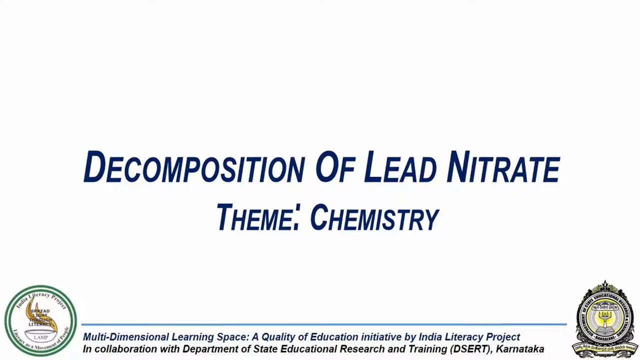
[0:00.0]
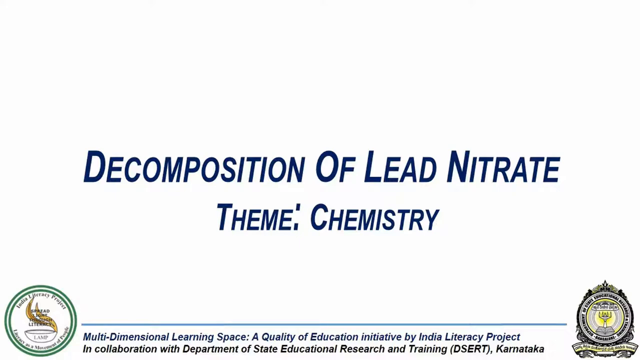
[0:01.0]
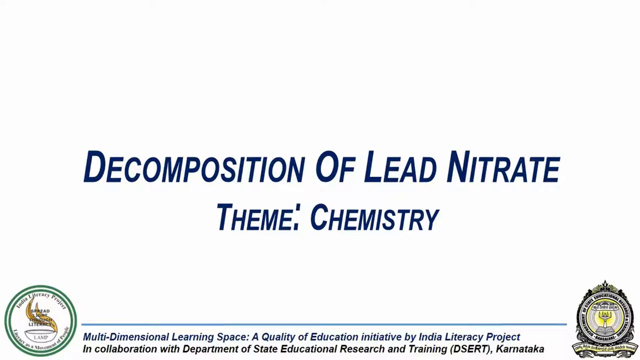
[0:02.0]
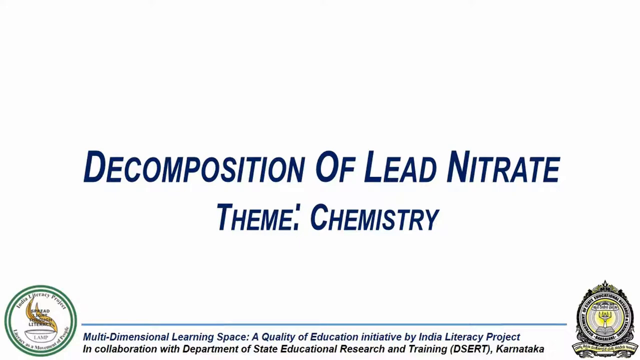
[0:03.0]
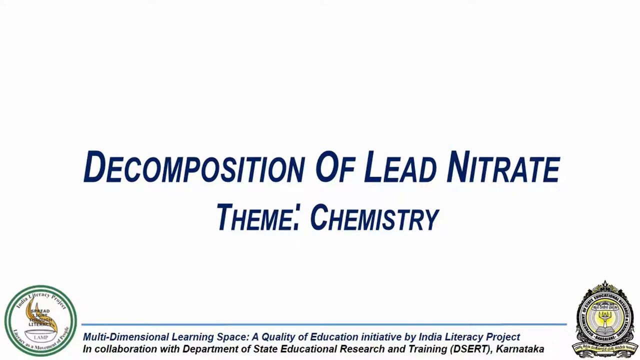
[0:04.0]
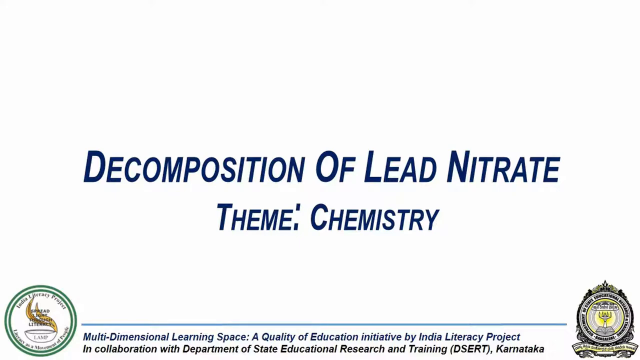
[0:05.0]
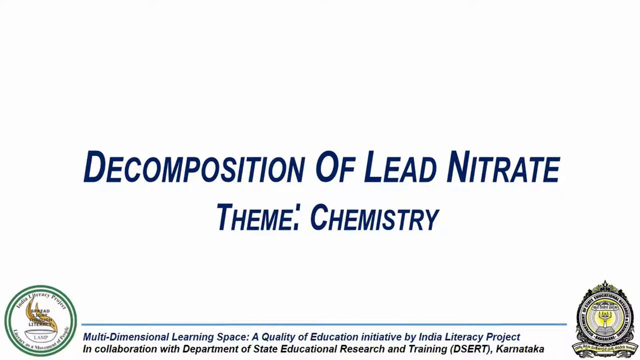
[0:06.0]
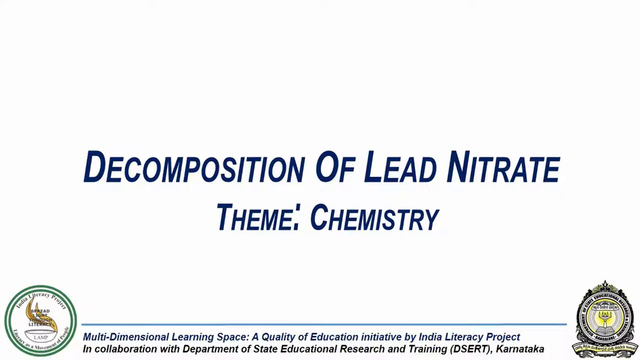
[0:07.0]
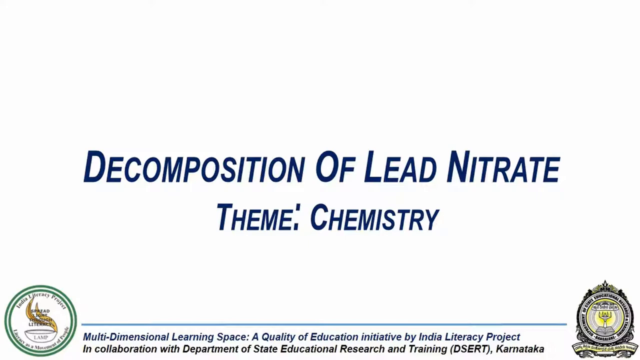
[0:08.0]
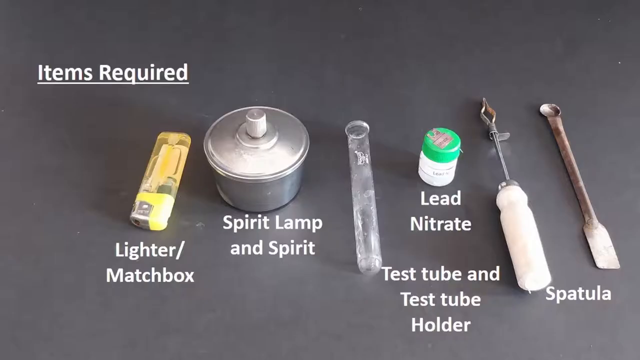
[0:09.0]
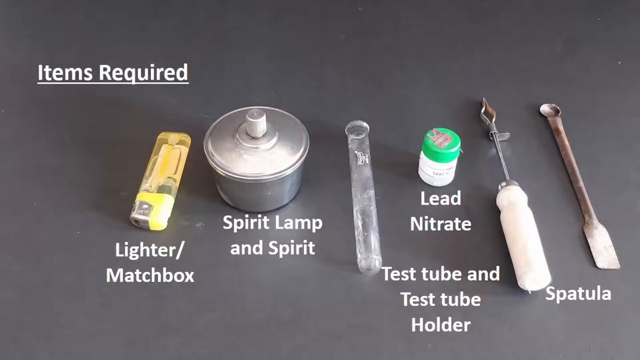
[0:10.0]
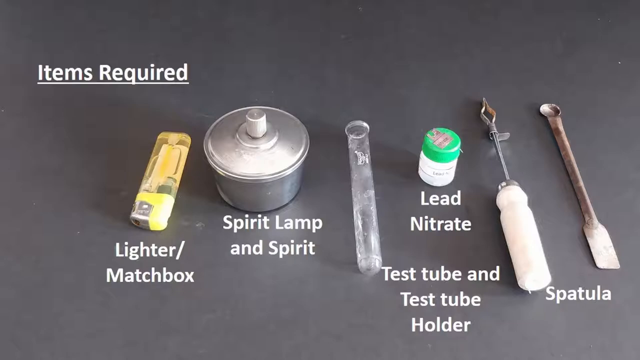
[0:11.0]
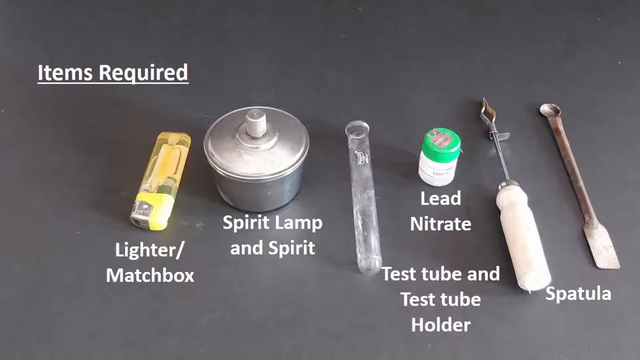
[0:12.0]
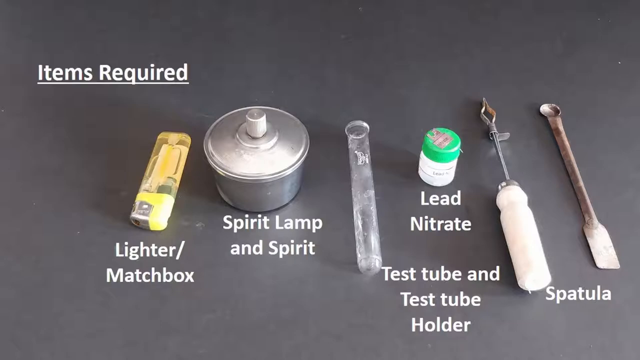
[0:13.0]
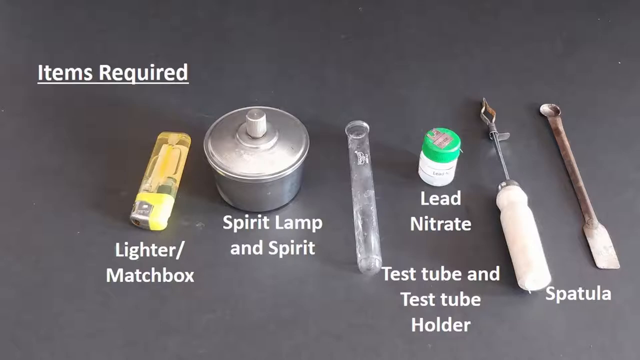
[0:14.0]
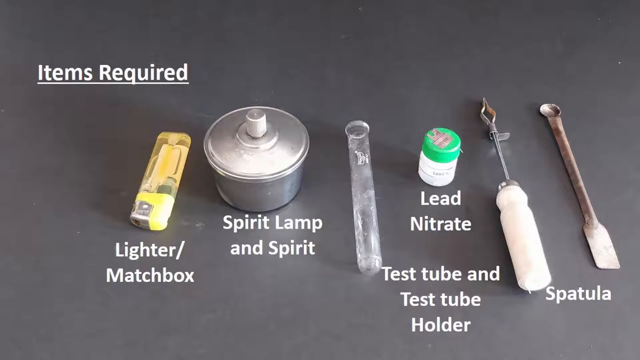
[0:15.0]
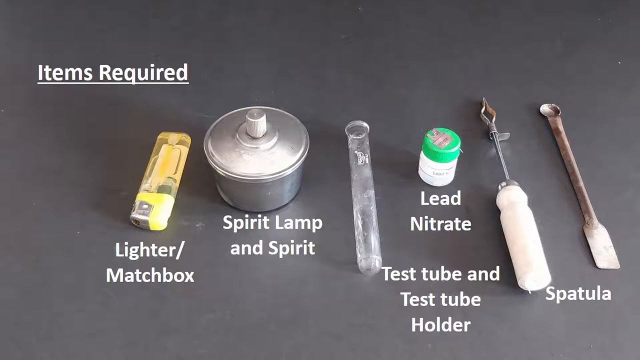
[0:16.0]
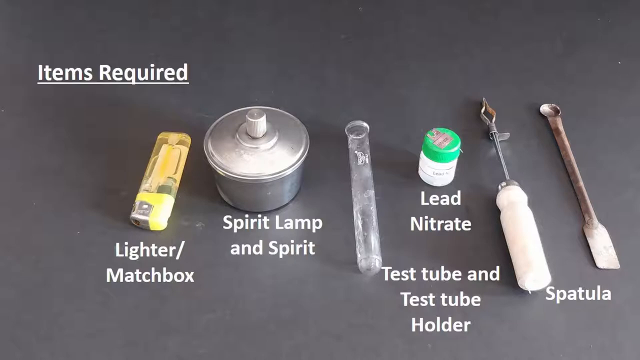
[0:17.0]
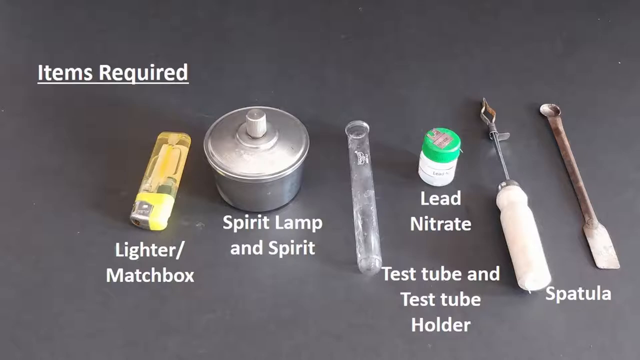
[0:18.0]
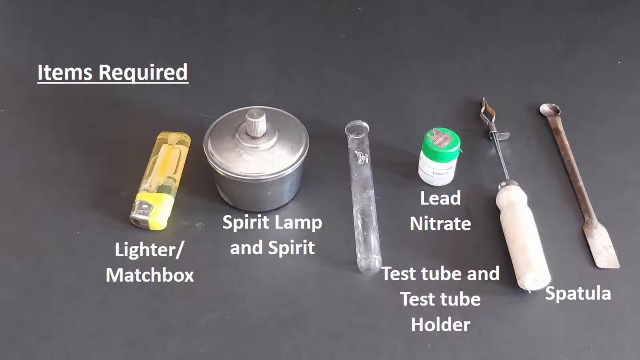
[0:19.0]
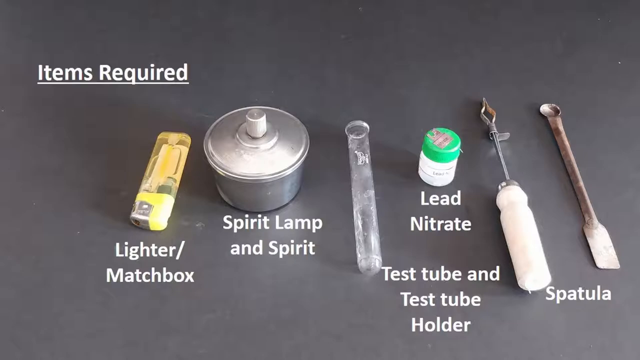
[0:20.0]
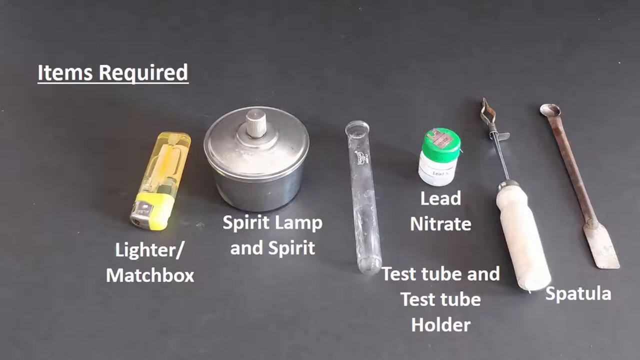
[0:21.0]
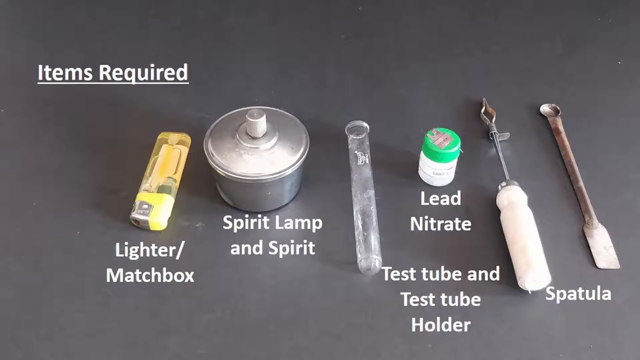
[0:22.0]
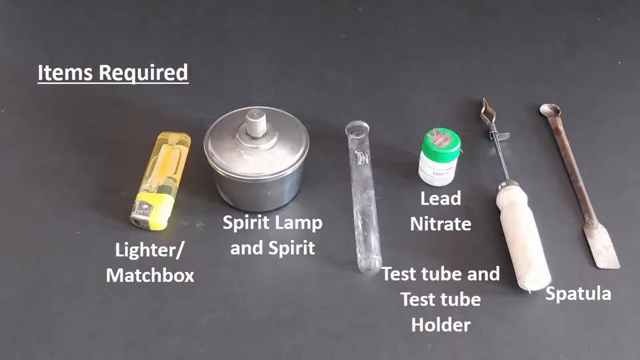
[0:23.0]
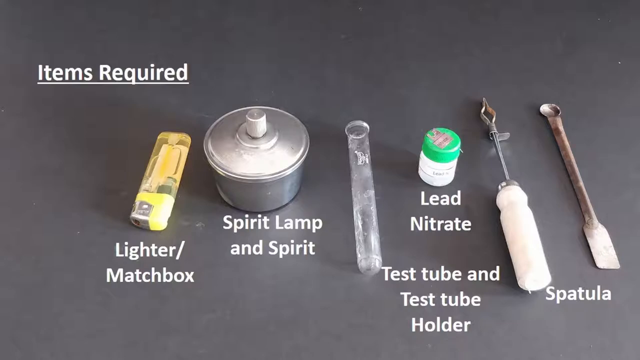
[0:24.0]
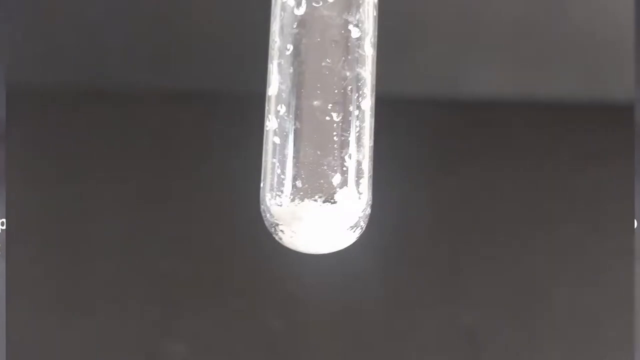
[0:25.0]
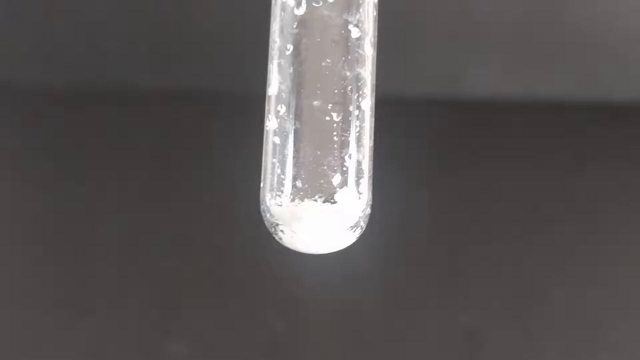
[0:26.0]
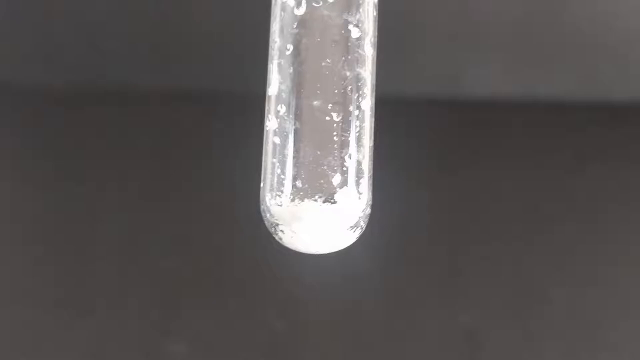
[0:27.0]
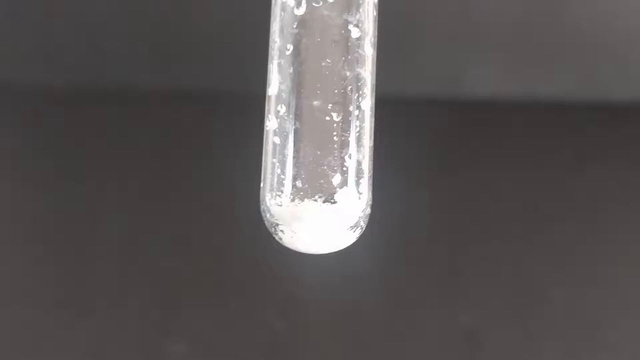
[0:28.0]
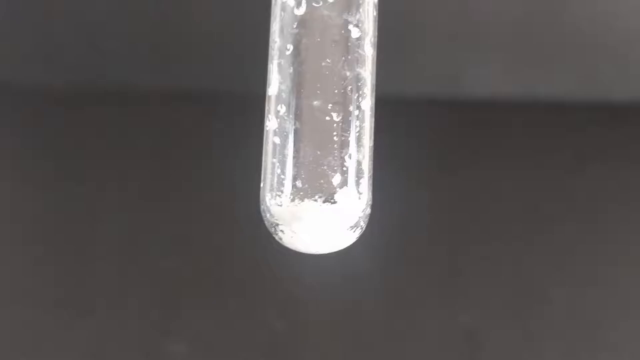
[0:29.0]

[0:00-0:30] The video opens on a white background with blue text in the center that reads "Decomposition of Lead Nitrate Theme Chemistry." There is some kind of logo at the bottom left and another logo at the bottom right. At the very bottom of the screen, between the two logos and the blue text, it reads "Multidimensional Learning Space: a quality of education initiative by India Literacy Project in collaboration with Department of State Educational Research and Training (DSERT)" followed by "Karmataka." The video then switches to a gray-looking table with several items laying on it. From left to right, they are a lighter, a spirit lamp, a test tube and test tube holder, lead nitrate, and a spatula. The lighter is yellow, with a transparent body through which the fluid inside is visible. The spirit lamp is silver.